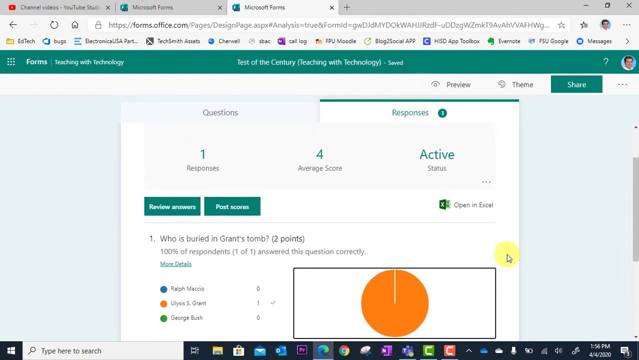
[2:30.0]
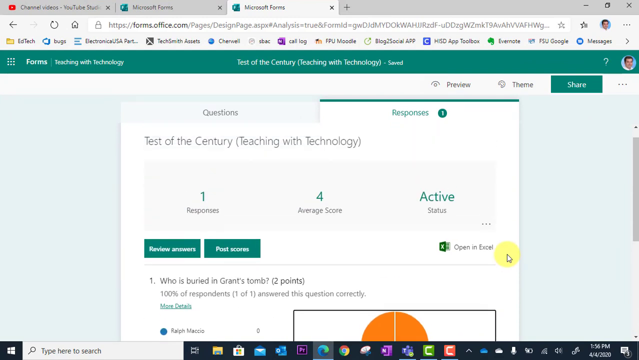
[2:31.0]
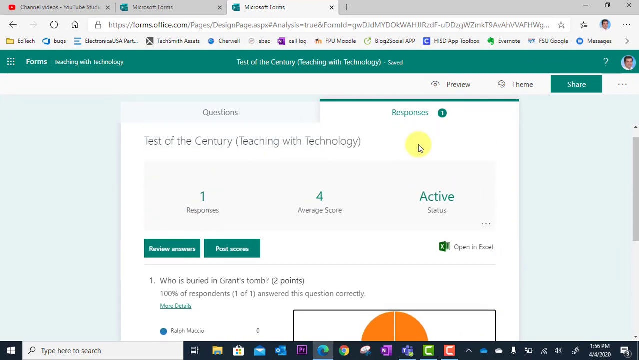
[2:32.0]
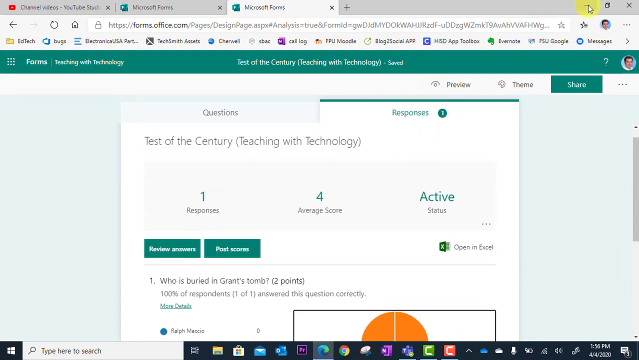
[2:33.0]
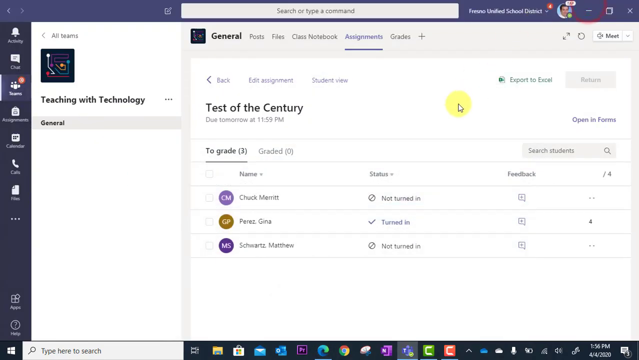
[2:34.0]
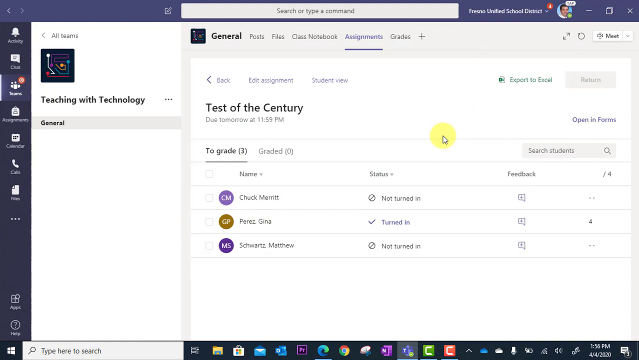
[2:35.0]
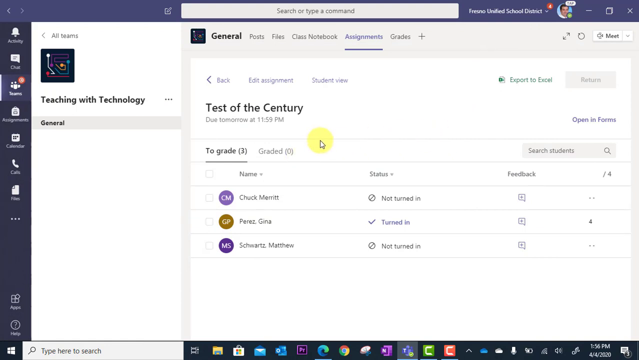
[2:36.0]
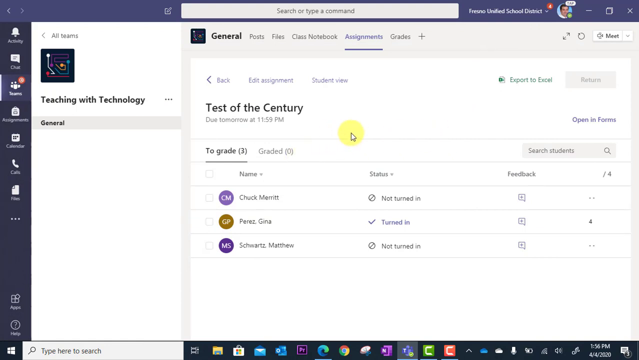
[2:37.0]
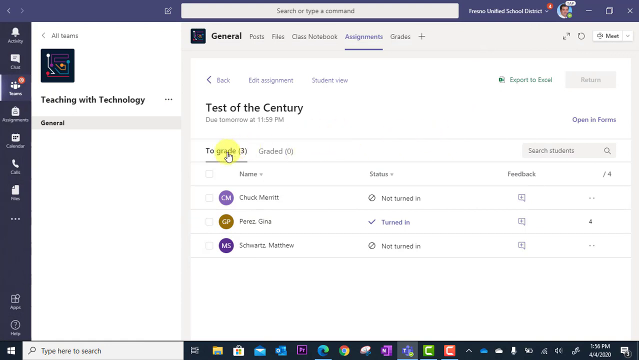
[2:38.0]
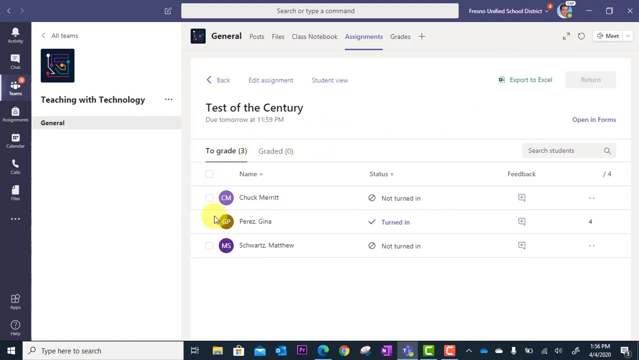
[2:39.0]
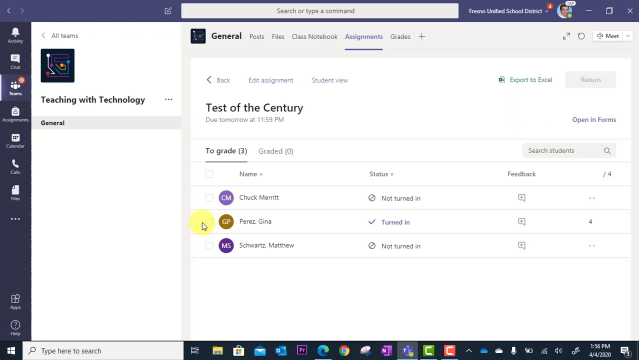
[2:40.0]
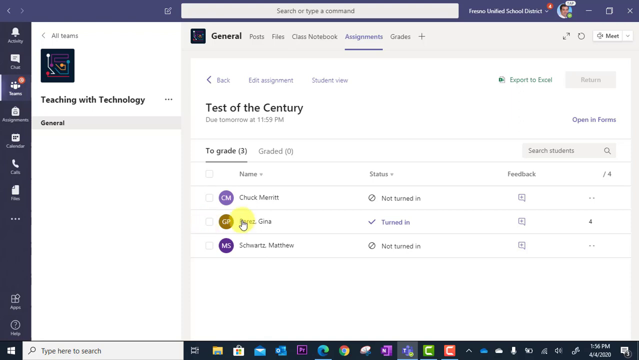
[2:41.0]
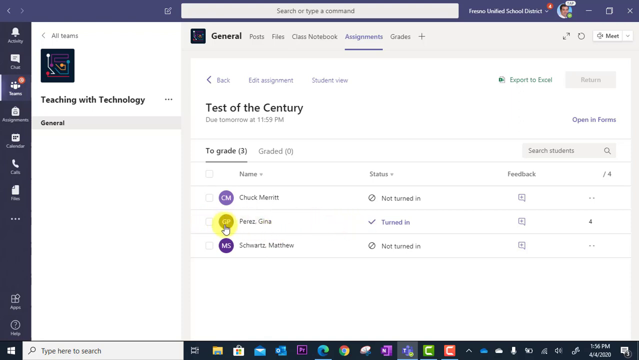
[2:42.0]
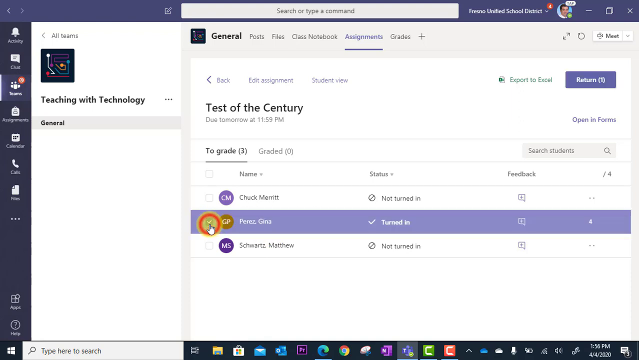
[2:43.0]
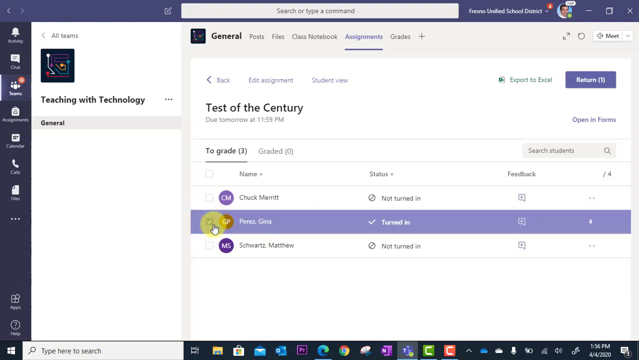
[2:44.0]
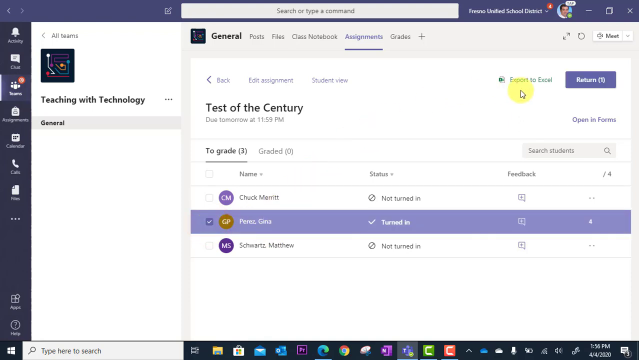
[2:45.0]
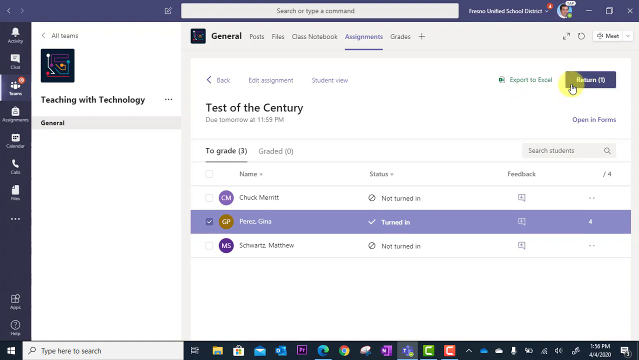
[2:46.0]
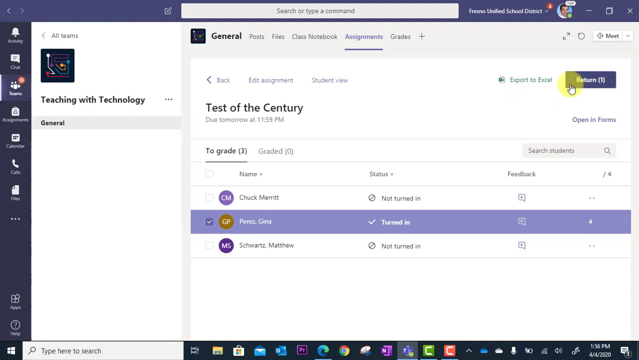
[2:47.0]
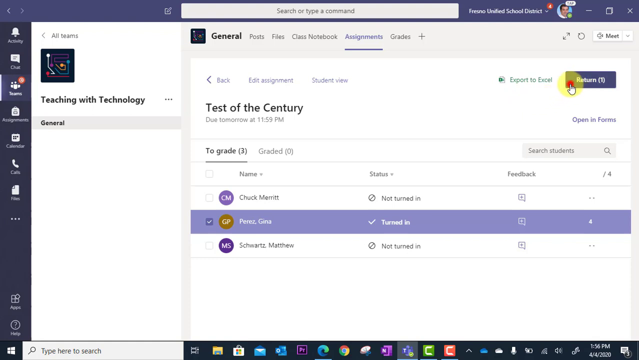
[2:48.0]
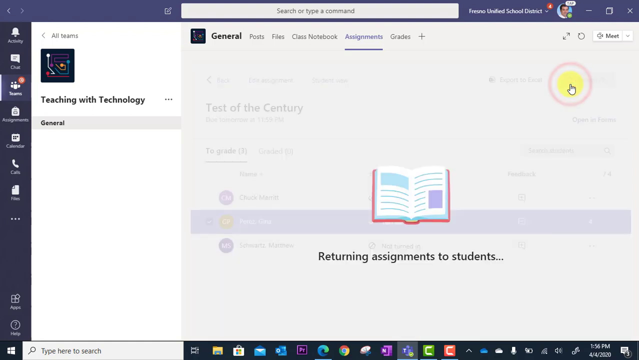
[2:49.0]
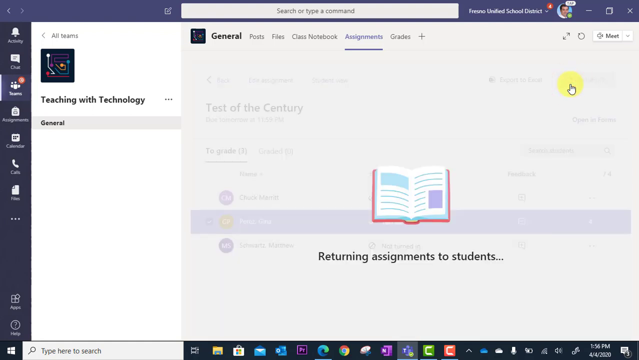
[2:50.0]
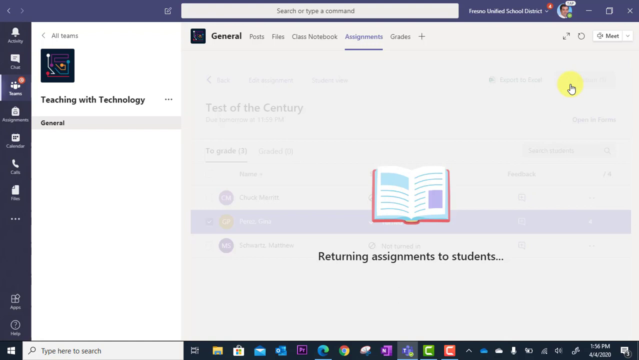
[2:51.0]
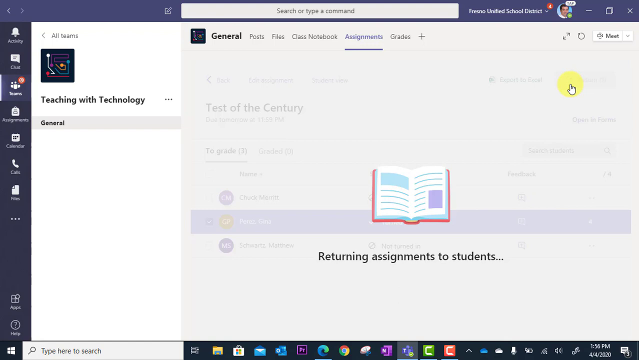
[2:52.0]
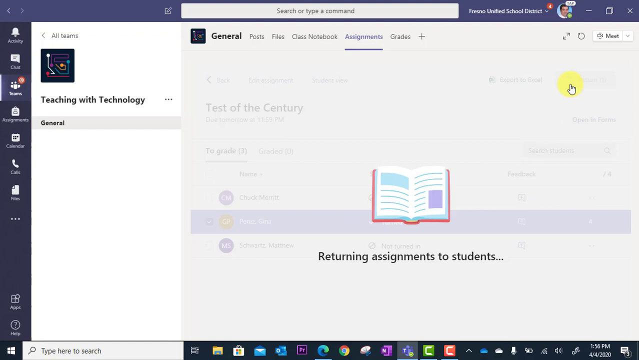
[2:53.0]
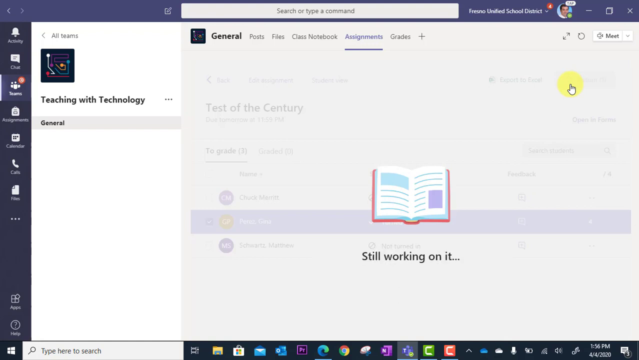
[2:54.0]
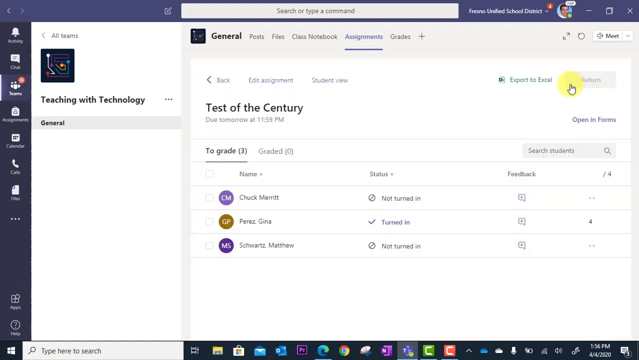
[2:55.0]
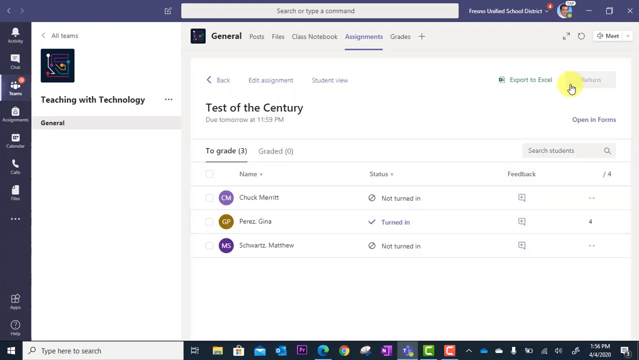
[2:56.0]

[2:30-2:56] The Microsoft Forms response page for the quiz remains in view, focusing on the summary data for the first two questions. The first question, who is buried in Grant's tomb, is displayed with three options: Ralph Macchio, Ulysses S. Grant, and George Bush. A check mark next to Grant indicates it is the correct answer. The pie chart on the right is an entirely filled orange circle, representing that 100% of respondents, one out of one, selected the correct answer, while the other two options have zero responses. Directly below, question two, about how much wood a woodchuck could chuck, lists 10 bundles, 100 bundles, and "we will never know." The green option is marked correct and chosen by a single respondent, as reflected in the pie chart to the right, which is completely filled in green. Both charts show unanimous correct responses, with no incorrect answers chosen. The interface keeps the same clean layout with a white background, a teal header, and labeled tabs for questions and responses near the top. On the right-hand side, an "Open in Excel" link for exporting the data is visible. At the bottom of the screen the Windows taskbar remains in view, showing open and pinned programs, while the browser tab and bookmarks are visible at the top. The scene remains static except for minor cursor movement, with no changes to the data or layout.